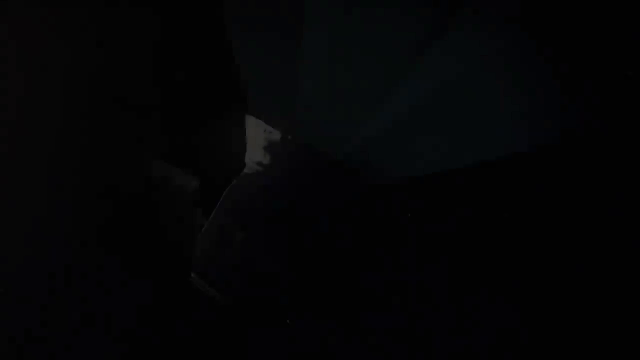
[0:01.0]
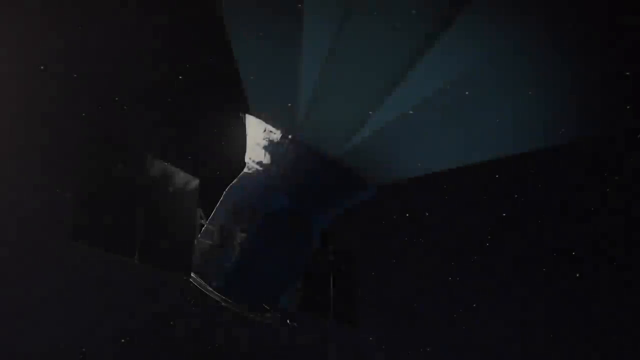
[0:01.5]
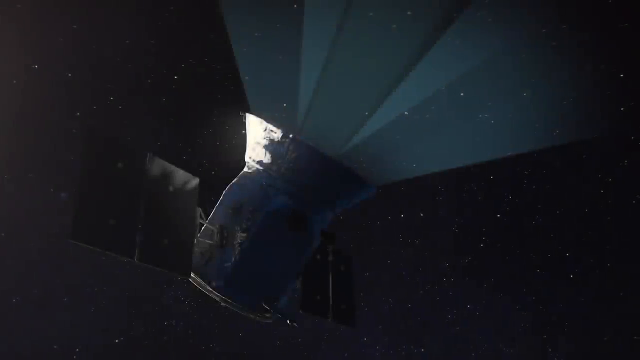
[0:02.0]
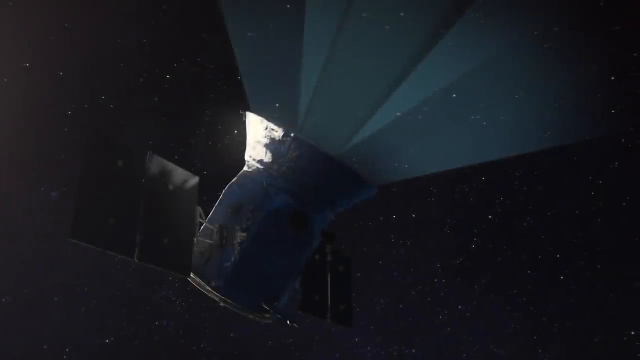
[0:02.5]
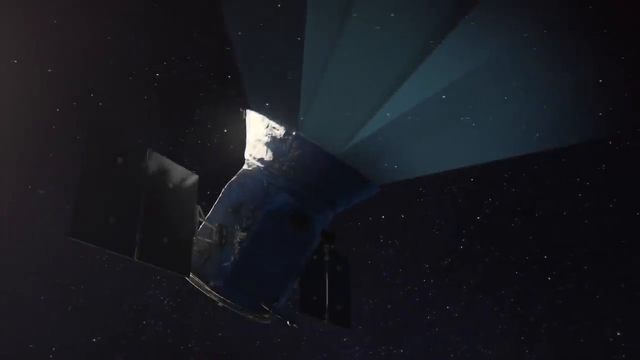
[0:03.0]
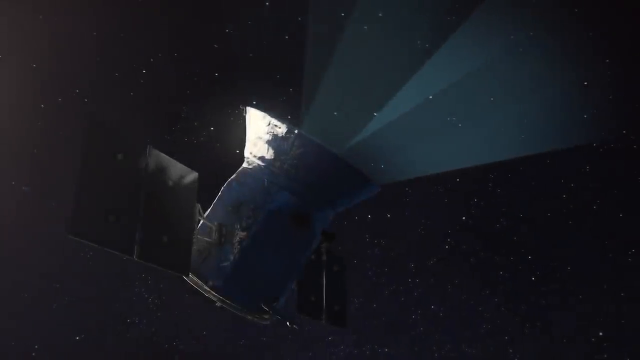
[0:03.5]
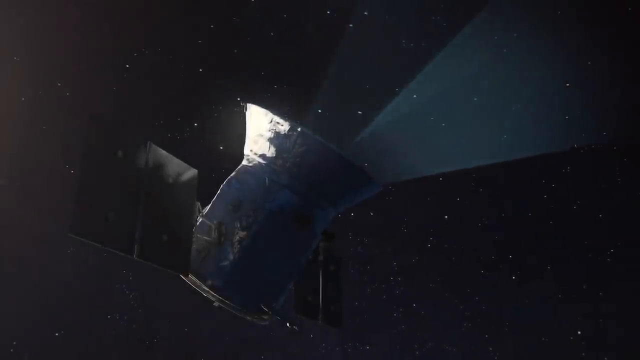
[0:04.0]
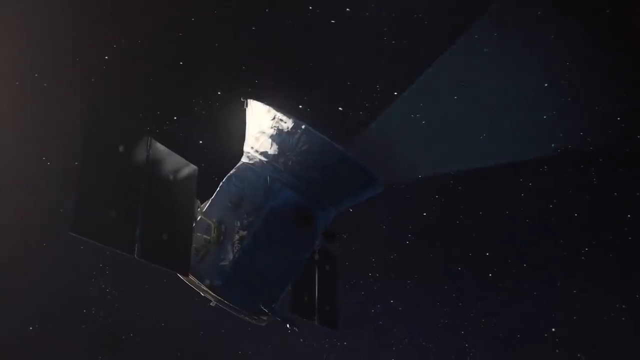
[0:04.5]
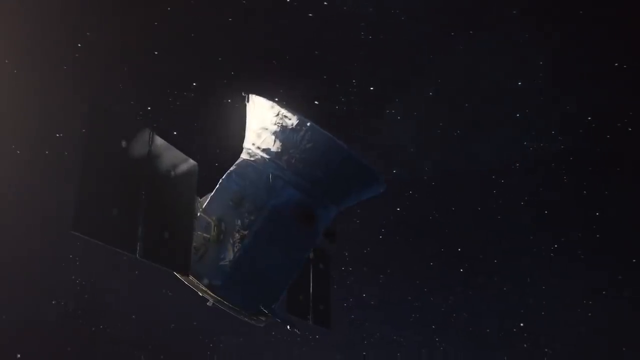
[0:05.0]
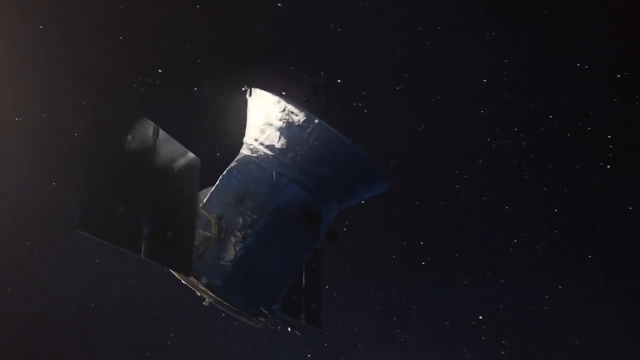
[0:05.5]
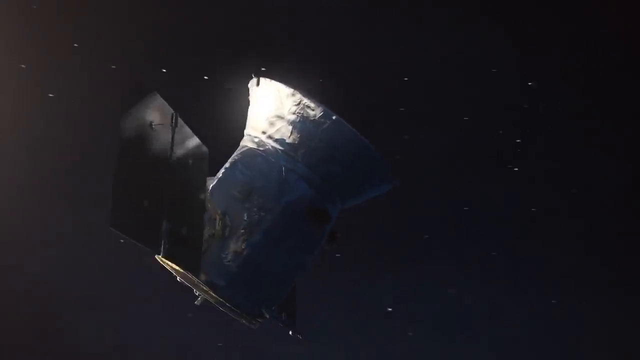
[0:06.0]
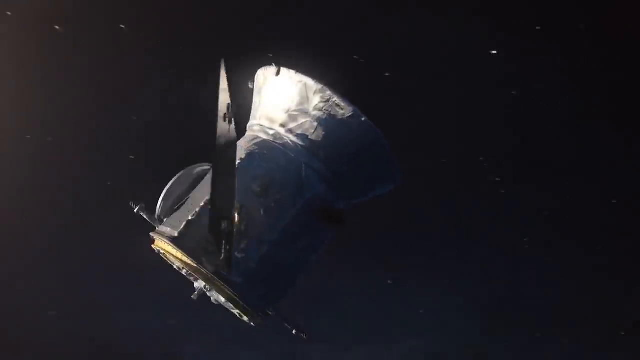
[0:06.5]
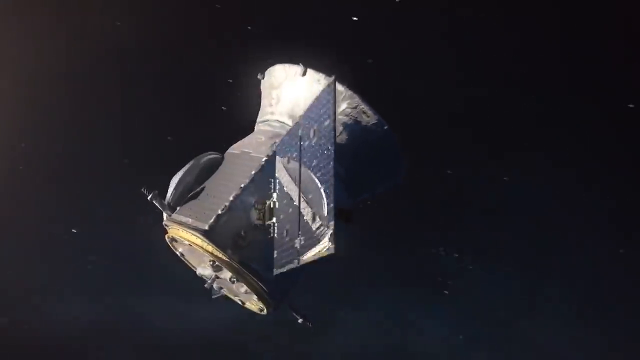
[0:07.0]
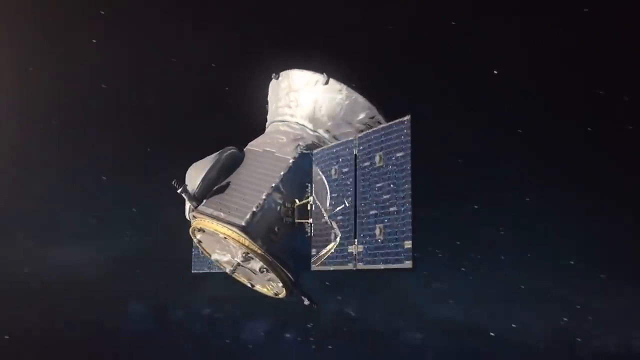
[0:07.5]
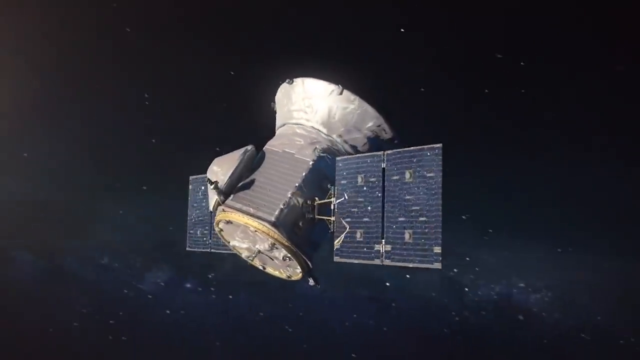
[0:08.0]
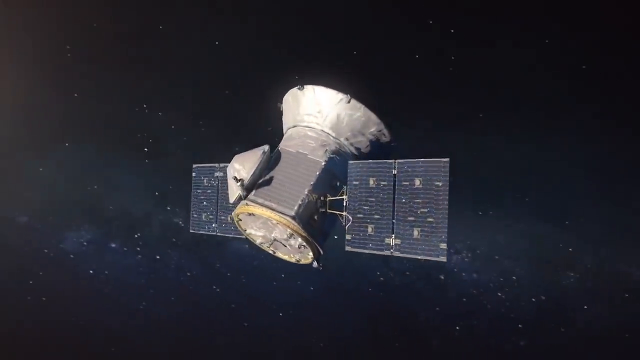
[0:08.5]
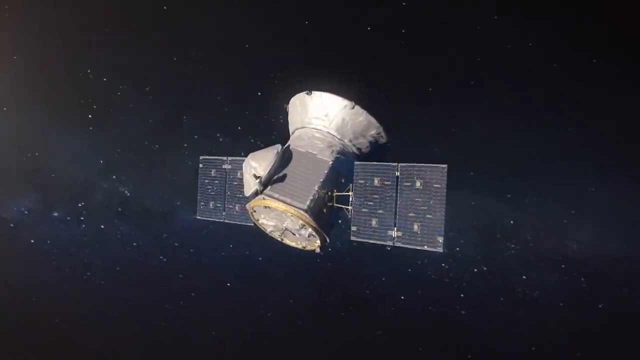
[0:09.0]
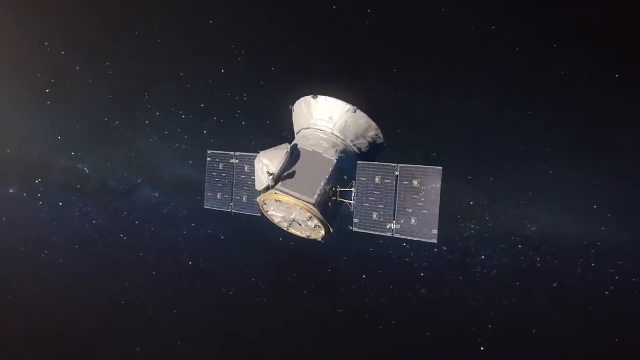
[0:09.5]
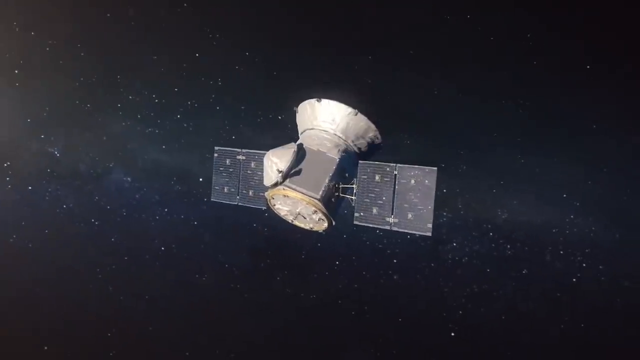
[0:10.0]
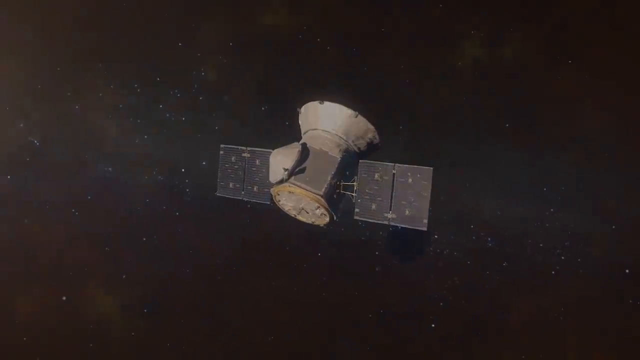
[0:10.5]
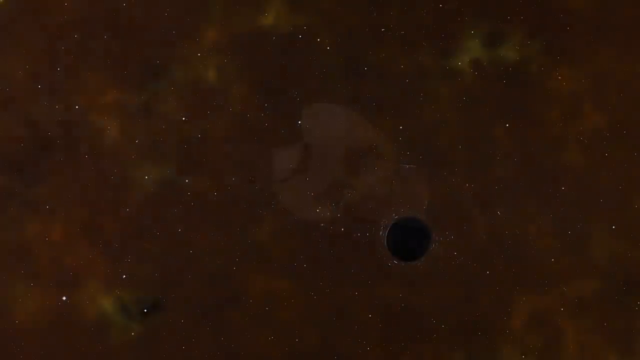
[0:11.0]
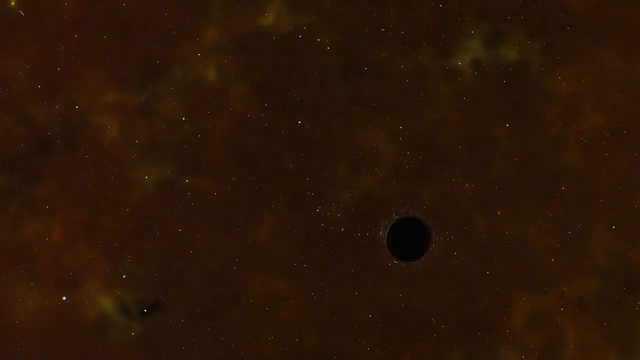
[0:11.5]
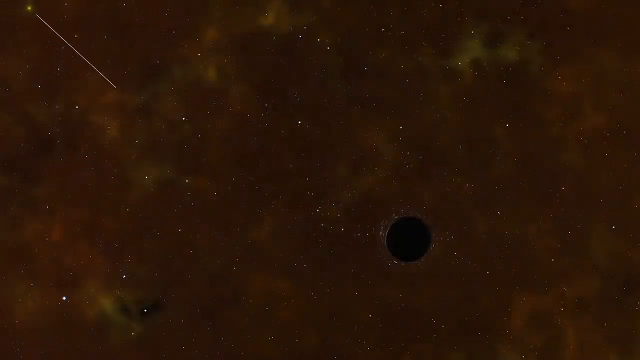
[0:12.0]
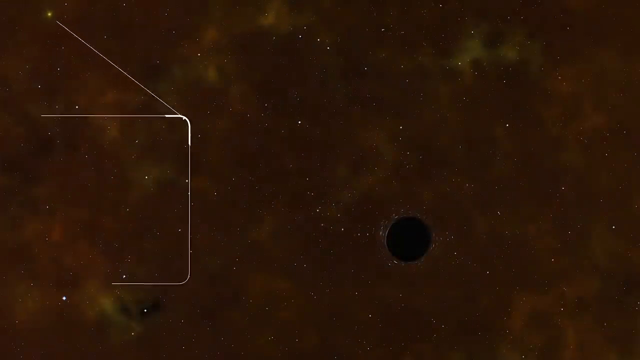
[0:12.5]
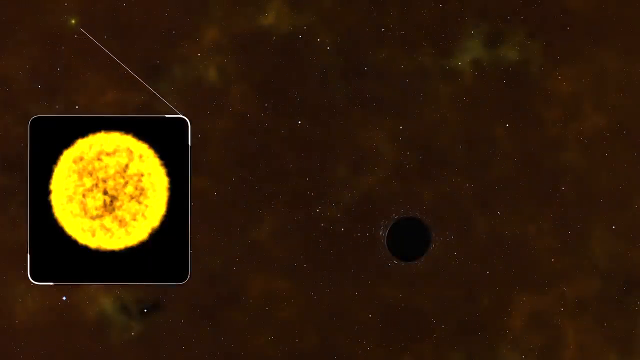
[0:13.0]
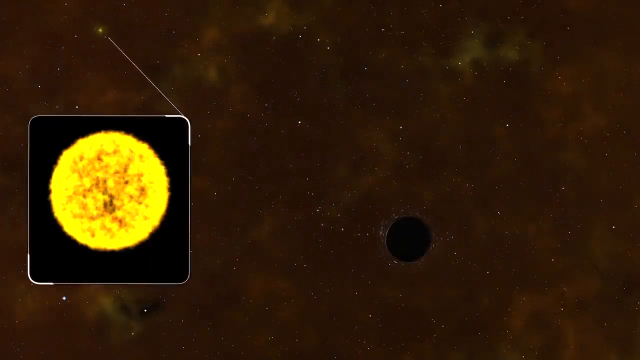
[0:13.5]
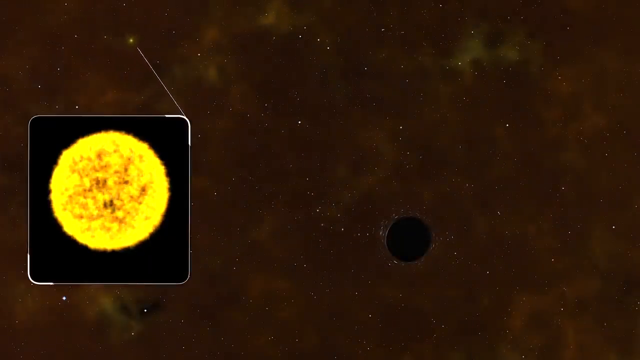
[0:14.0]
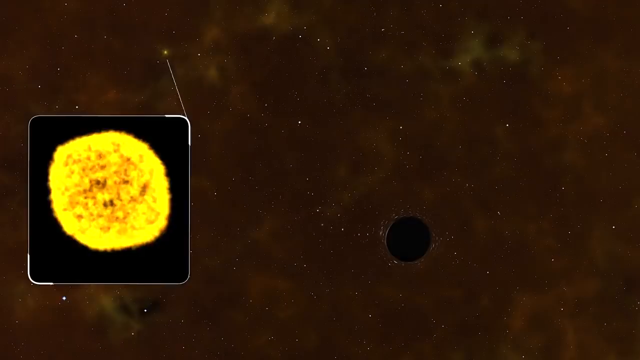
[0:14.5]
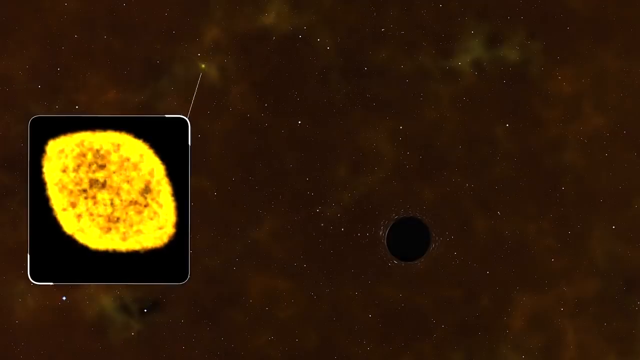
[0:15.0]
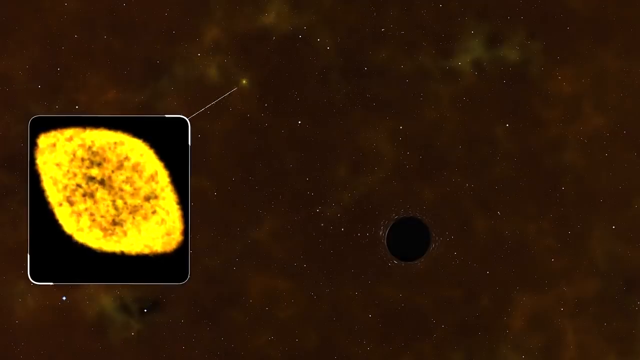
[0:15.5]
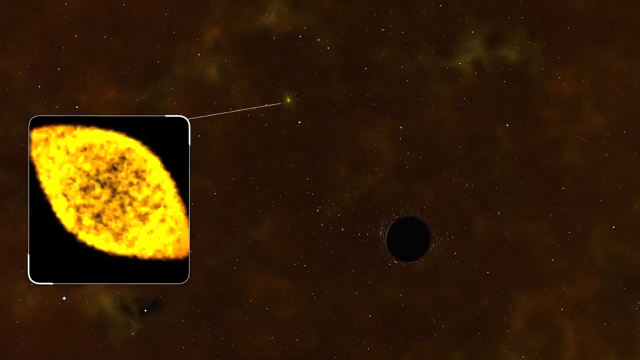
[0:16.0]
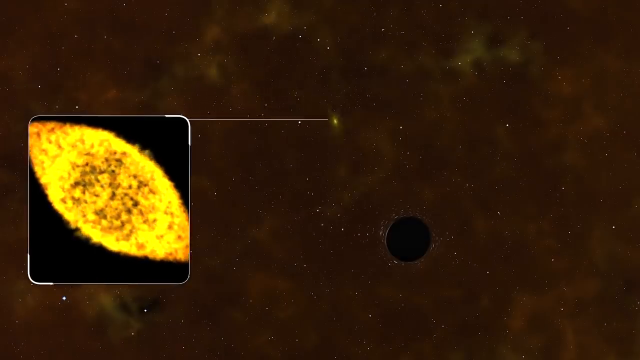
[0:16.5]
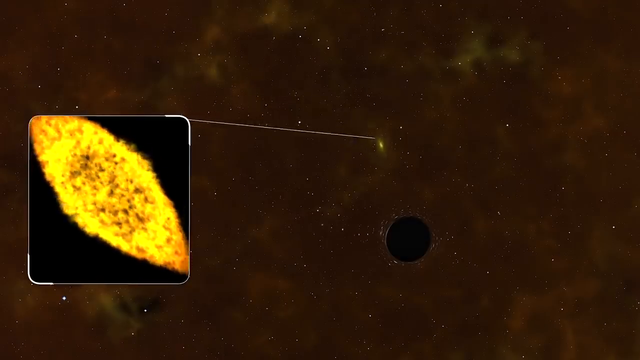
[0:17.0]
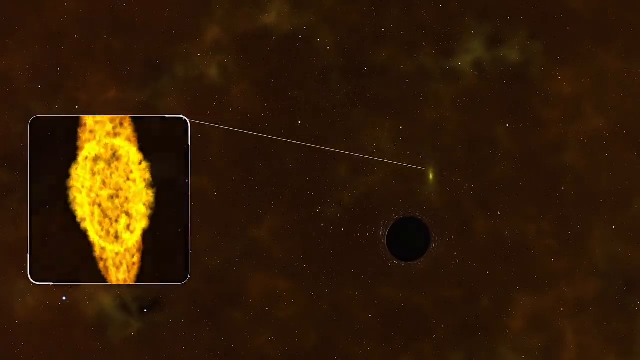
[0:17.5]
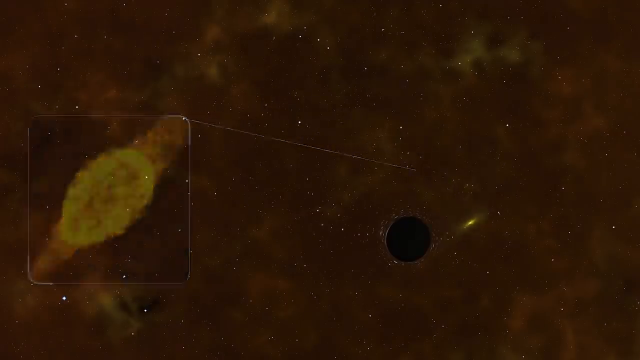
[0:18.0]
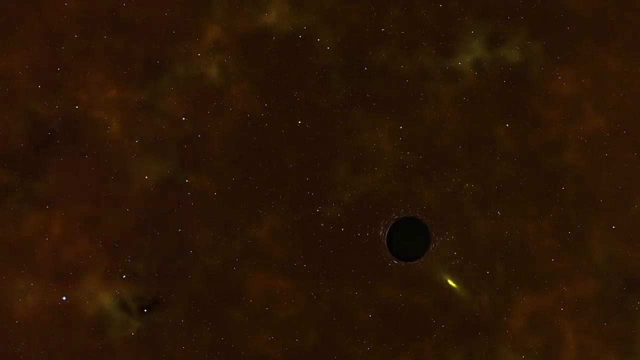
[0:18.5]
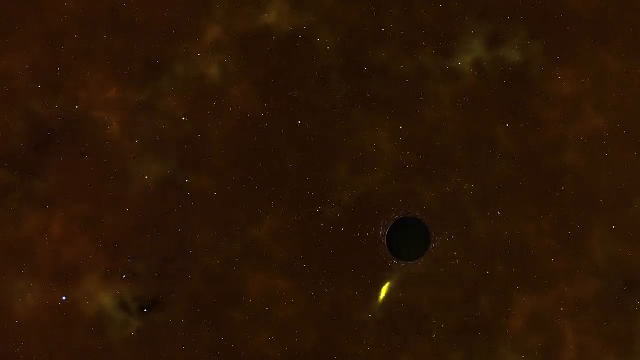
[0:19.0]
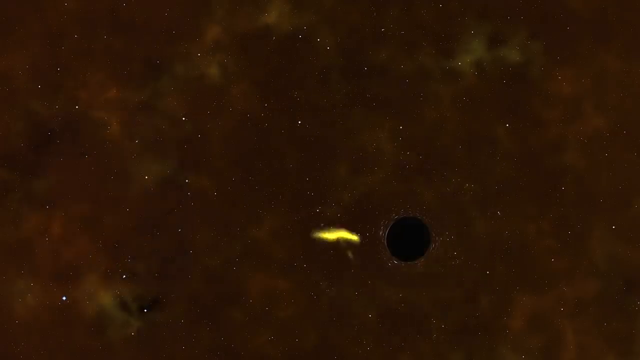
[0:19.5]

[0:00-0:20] An object that appears to be a satellite or something similar moves around the planet.